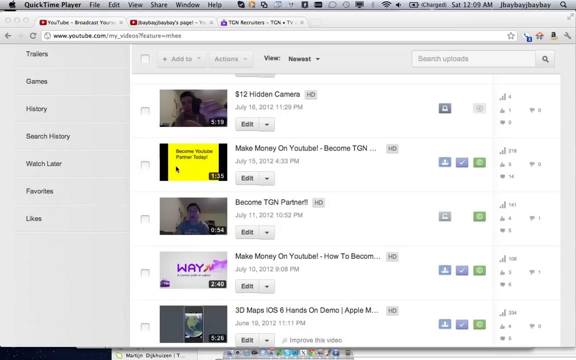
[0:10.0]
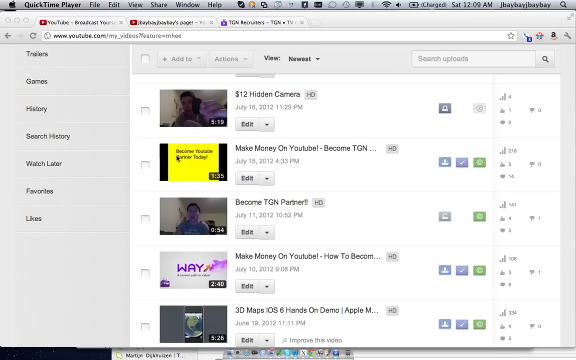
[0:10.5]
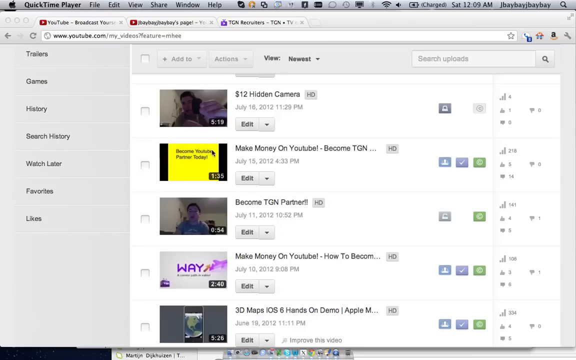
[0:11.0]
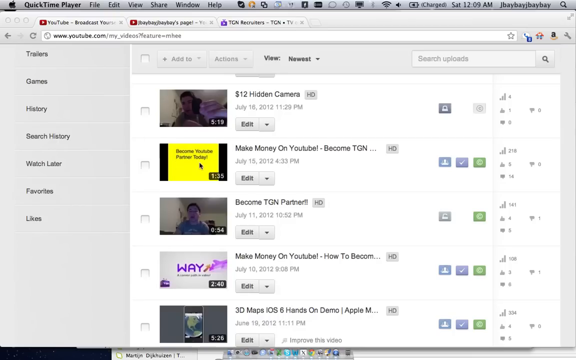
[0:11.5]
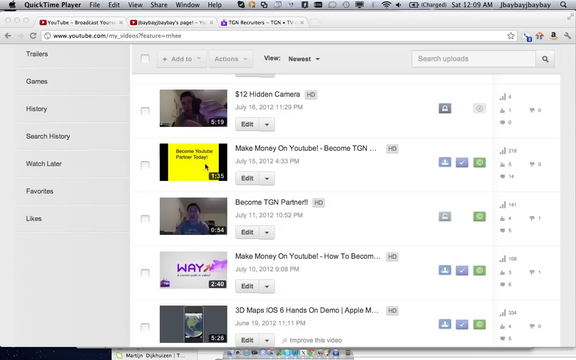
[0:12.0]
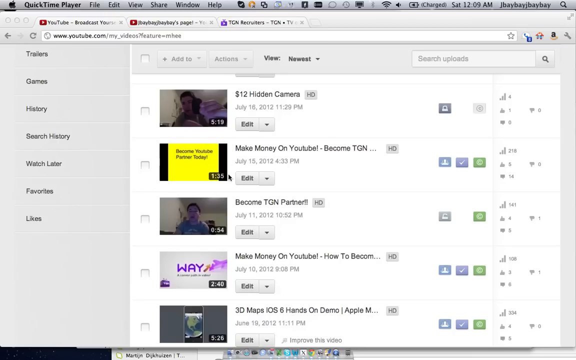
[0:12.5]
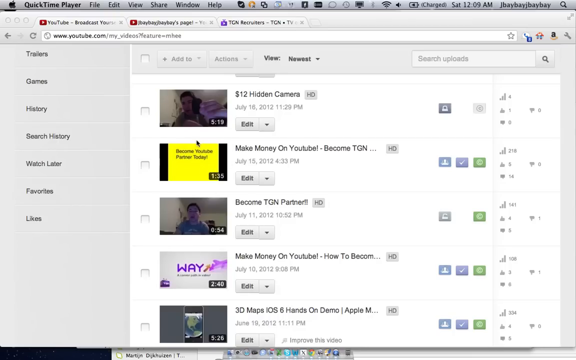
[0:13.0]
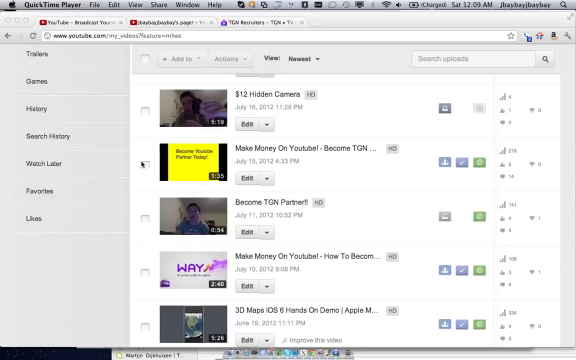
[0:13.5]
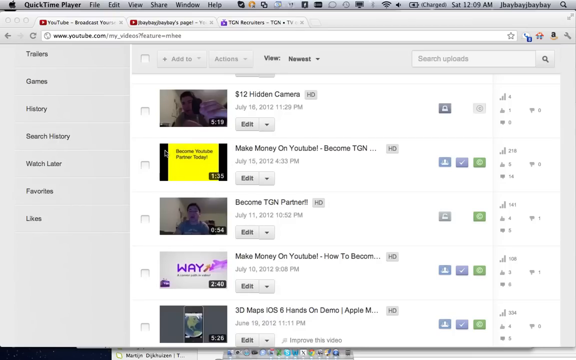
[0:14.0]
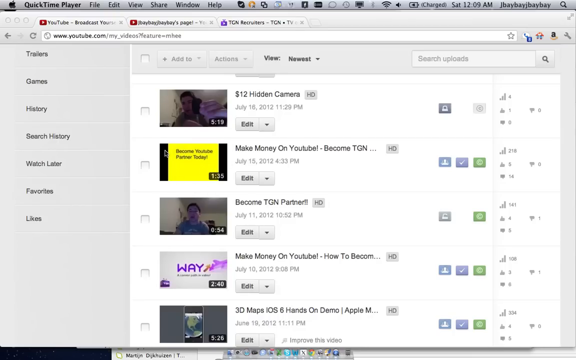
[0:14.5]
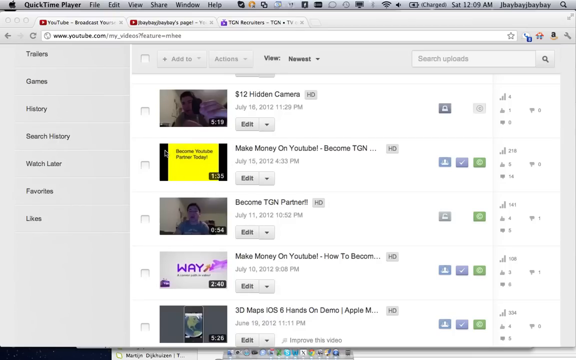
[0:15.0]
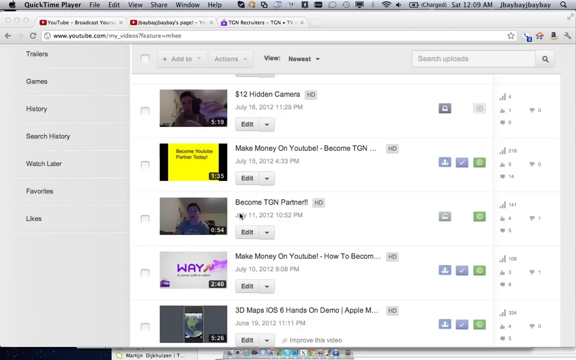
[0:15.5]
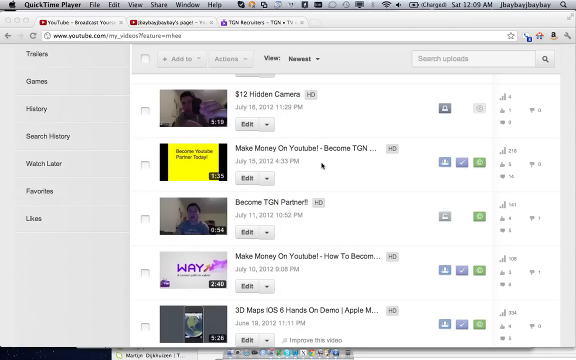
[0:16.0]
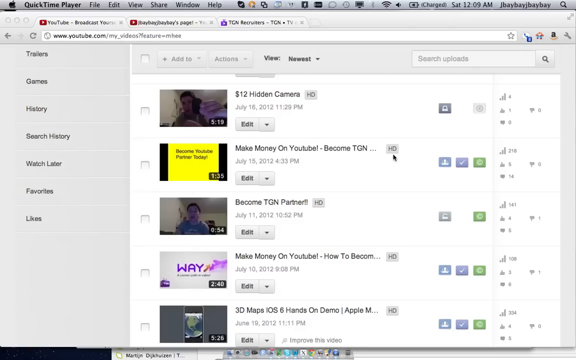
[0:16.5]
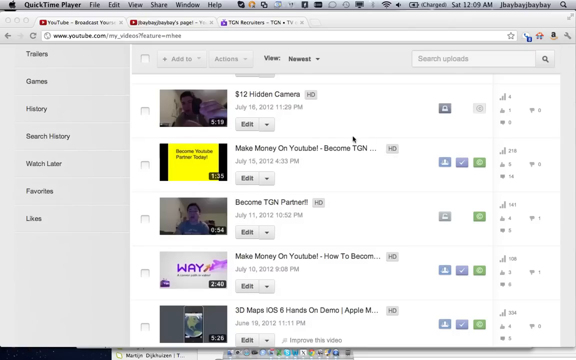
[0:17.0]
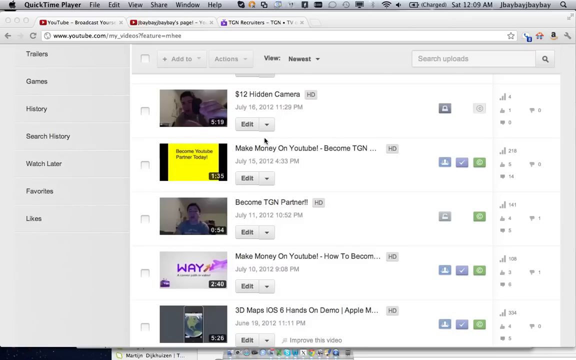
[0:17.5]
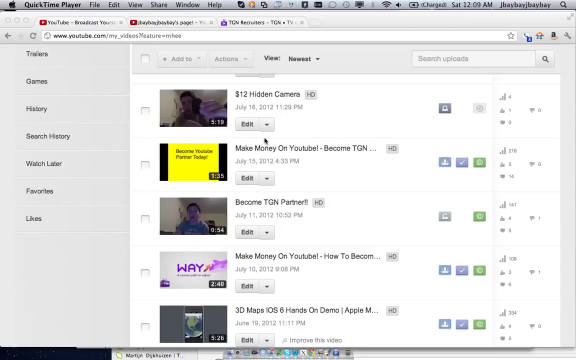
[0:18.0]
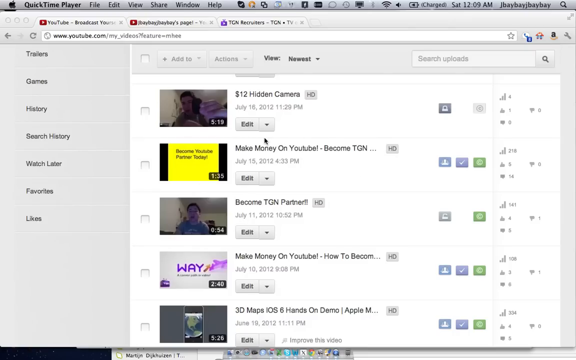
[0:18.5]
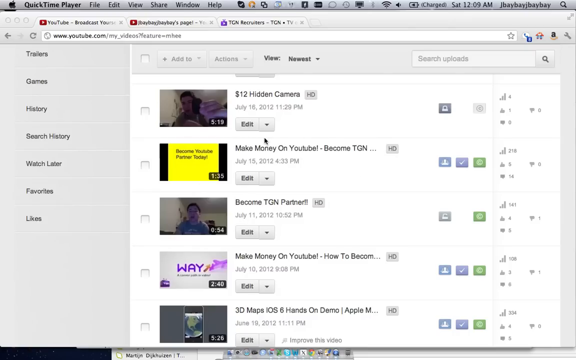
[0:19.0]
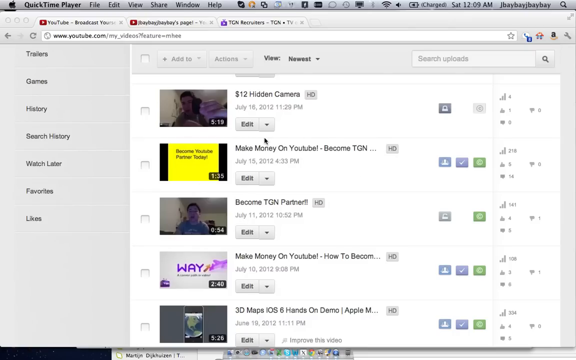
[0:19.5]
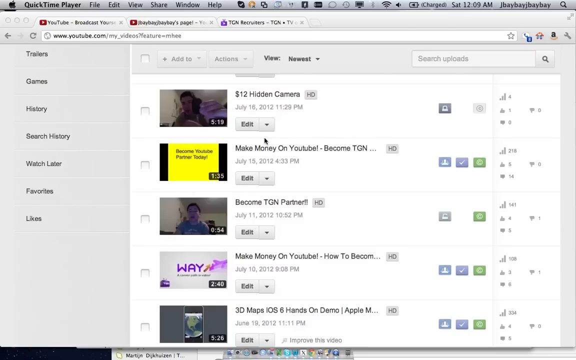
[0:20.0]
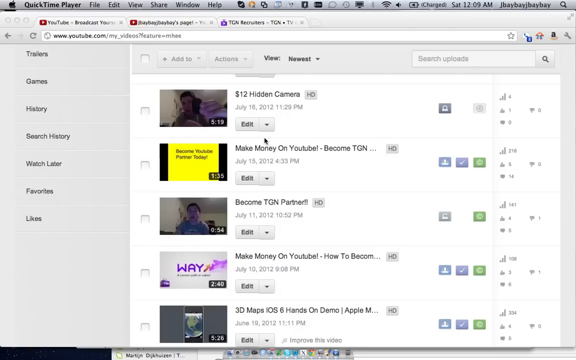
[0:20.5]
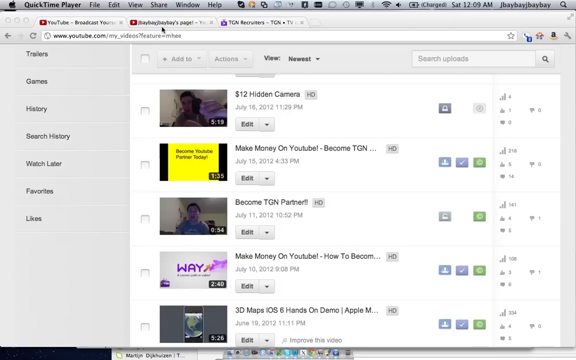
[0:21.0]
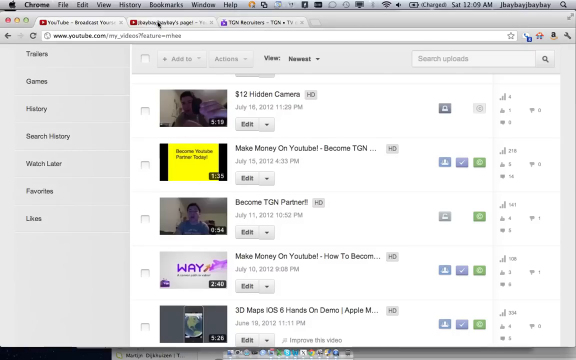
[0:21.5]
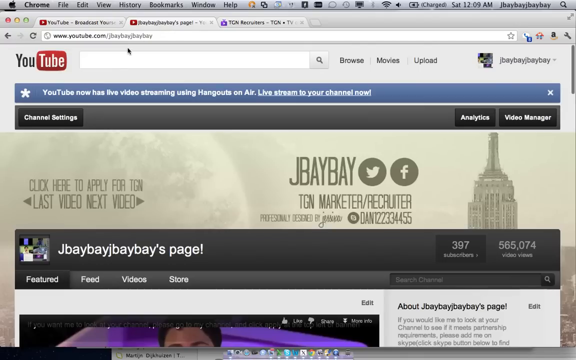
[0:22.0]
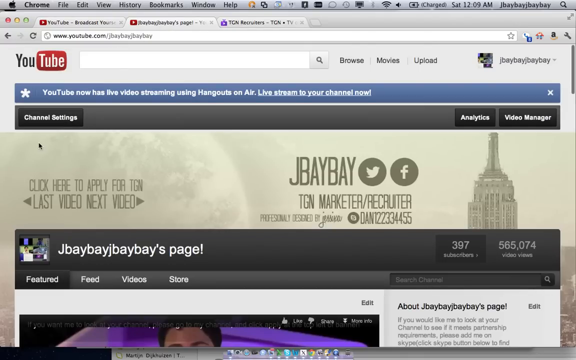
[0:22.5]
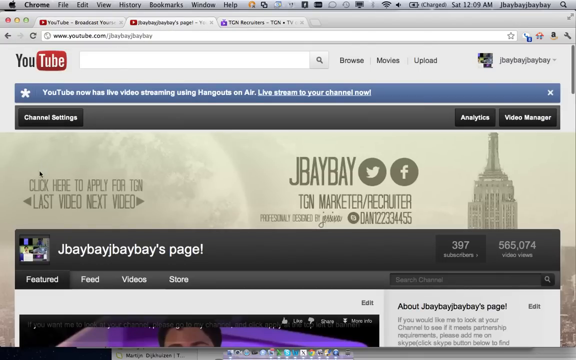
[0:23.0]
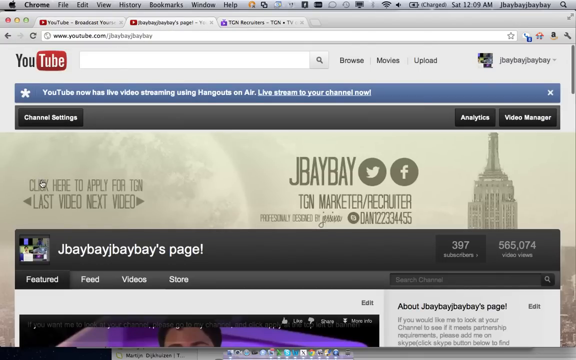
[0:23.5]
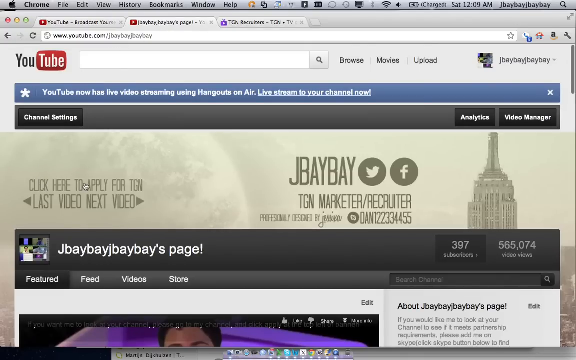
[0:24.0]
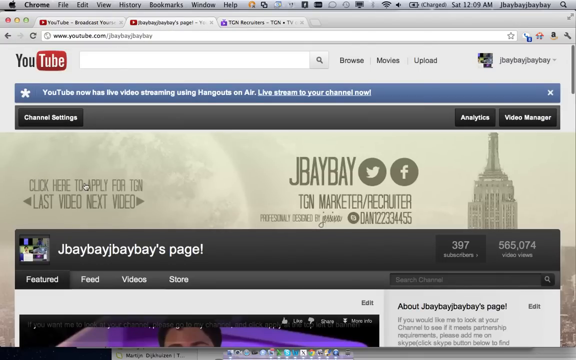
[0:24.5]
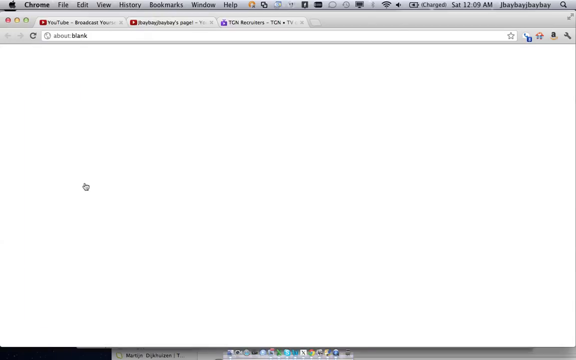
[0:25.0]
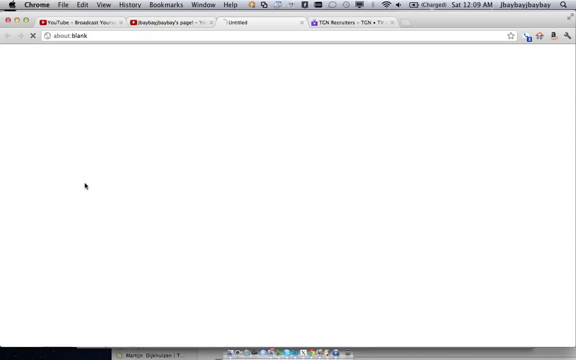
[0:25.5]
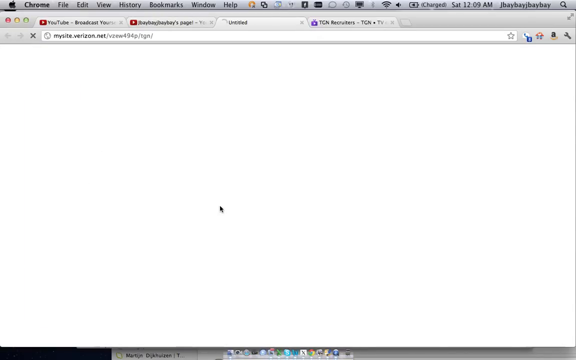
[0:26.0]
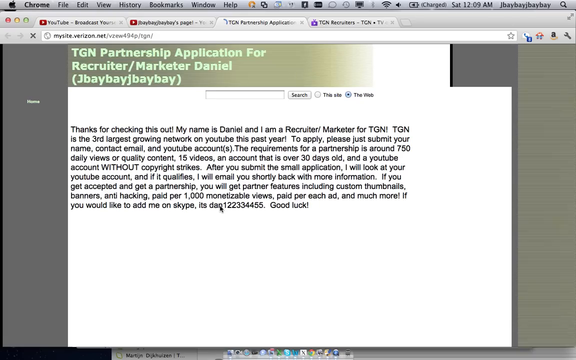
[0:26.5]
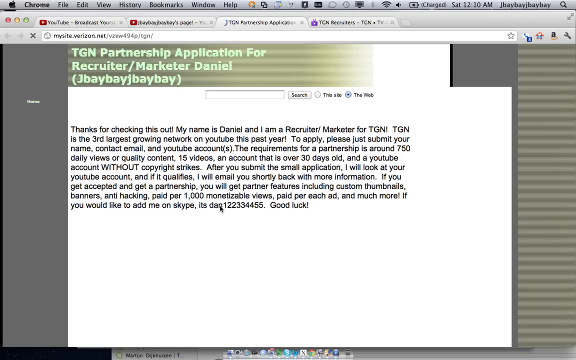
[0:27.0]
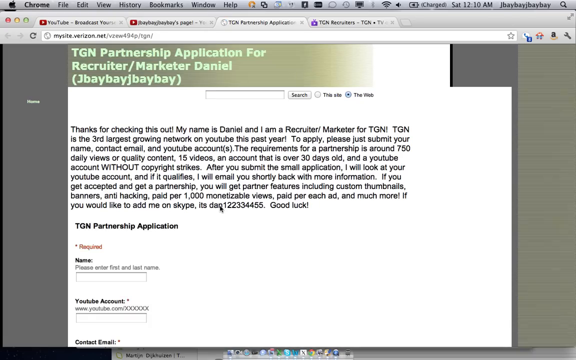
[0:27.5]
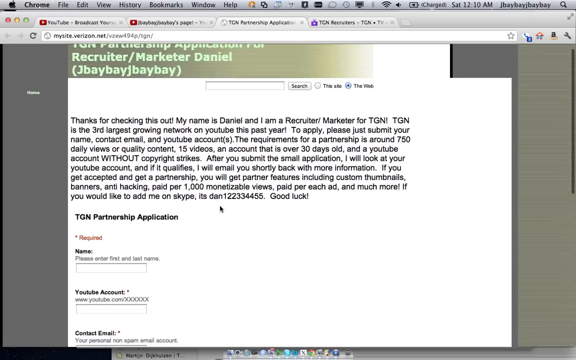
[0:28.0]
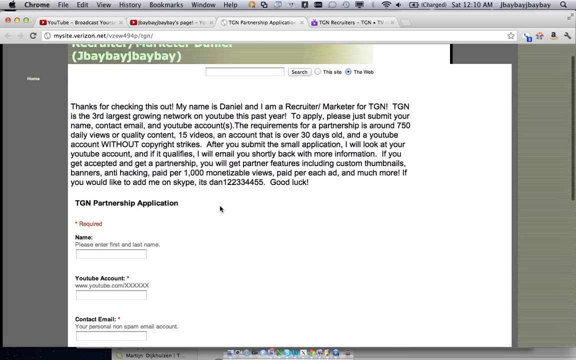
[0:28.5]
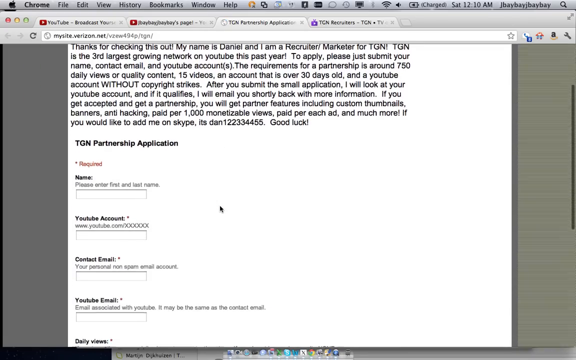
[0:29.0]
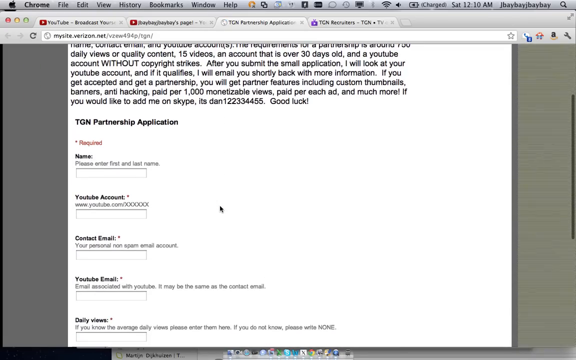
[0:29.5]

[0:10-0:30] The video "become a YouTube partner today" is circled. The screen then switches to a YouTube channel page showing "TGN Marketer, Recruiter", "Professionally Designed by Jessica", "Click here to apply for TGN", "last video" and "next video", along with the text "YouTube now has live video streaming using Hangouts On Air. Live stream to your channel now." The "Click here to apply" link is clicked, opening a new page titled "TGN Partnership Application for Recruiter Marketer Daniel J. Bebe". Its text reads: "thanks for checking this out. My name is Daniel, and I am a recruiter marketer for TGN. TGN is the third largest growing network on YouTube this past year. To apply, please just submit your name, contact email, and YouTube accounts. The requirements for a partnership is around 750 daily views or quality content, 15 videos, an account that is over 30 days old, and a YouTube account without copyright strikes. After you submit the small application, I will look at your YouTube account. And if it qualifies, I will email you shortly back with more information. If you get accepted and get a partnership, you will get partner features, including custom thumbnails, banners". The page also gives a Skype name, Dan, with a phone number, and ends with "good luck".